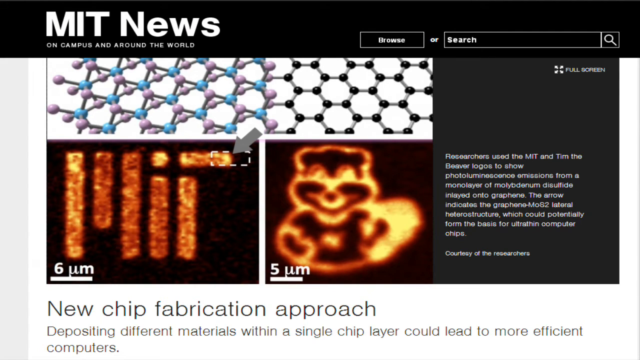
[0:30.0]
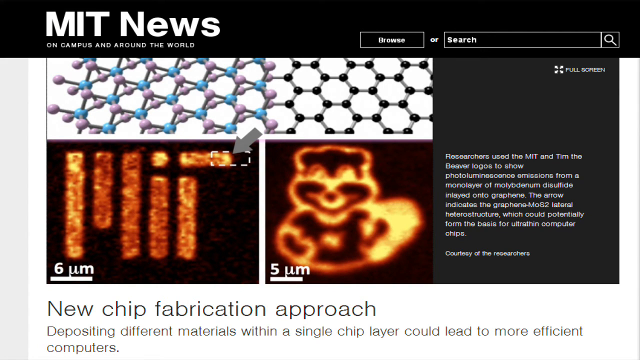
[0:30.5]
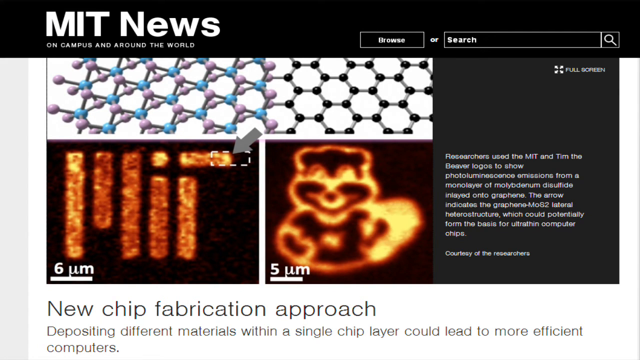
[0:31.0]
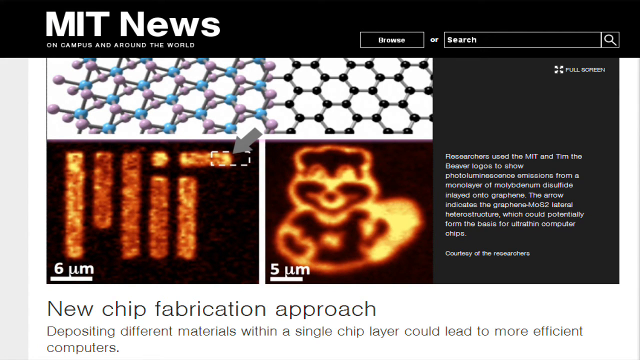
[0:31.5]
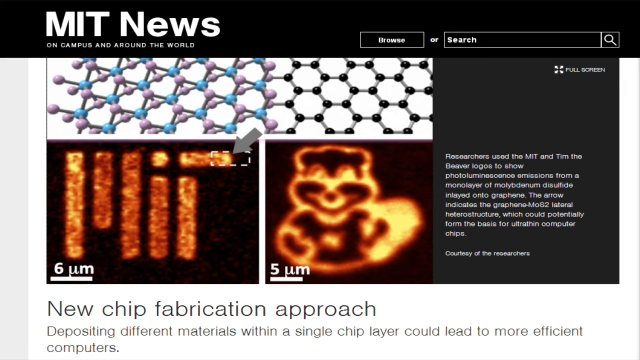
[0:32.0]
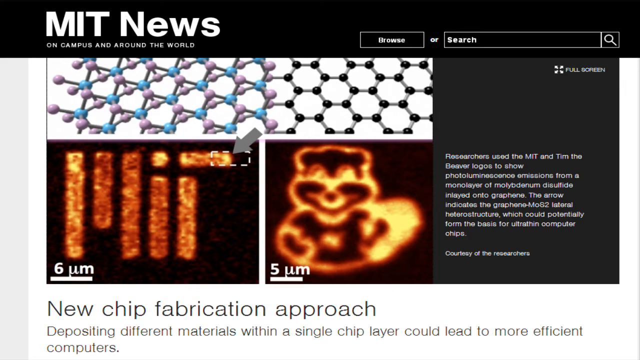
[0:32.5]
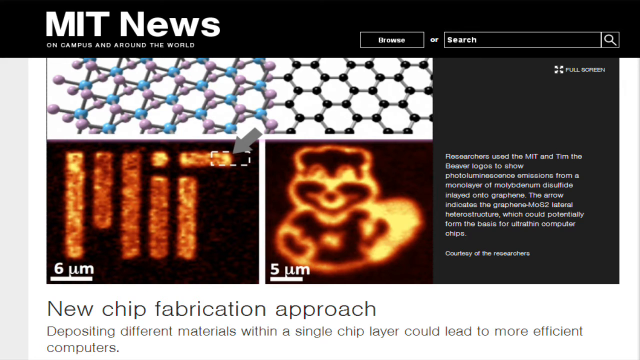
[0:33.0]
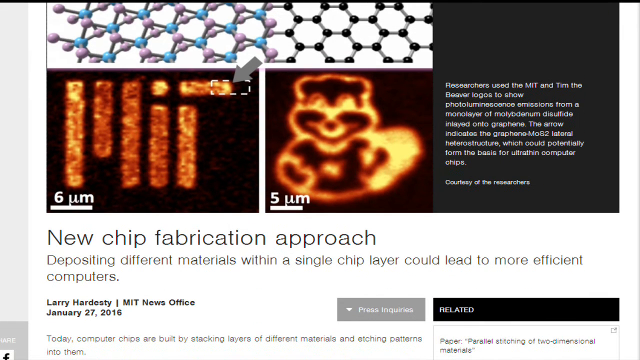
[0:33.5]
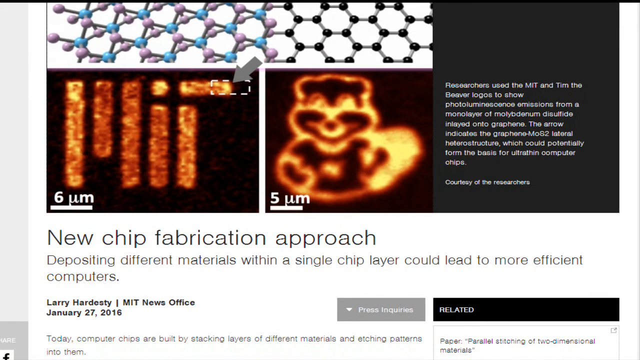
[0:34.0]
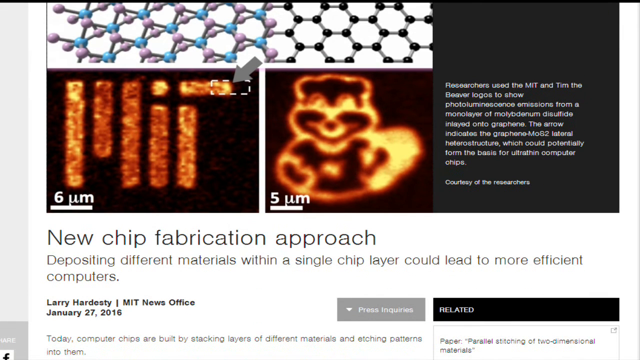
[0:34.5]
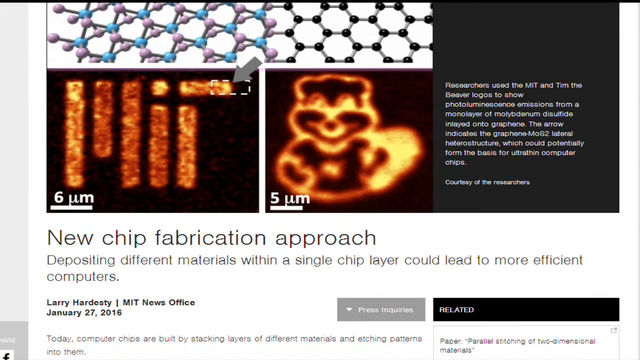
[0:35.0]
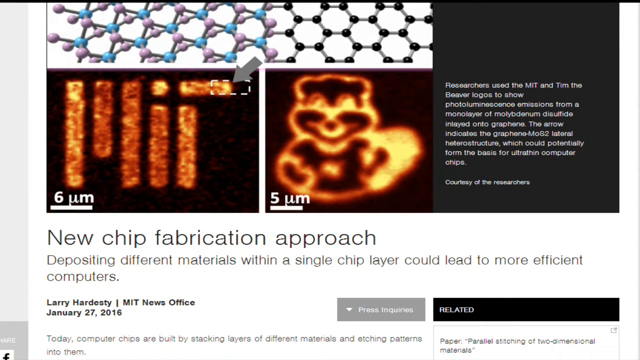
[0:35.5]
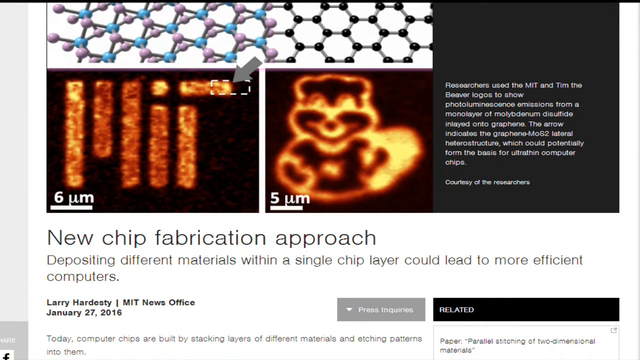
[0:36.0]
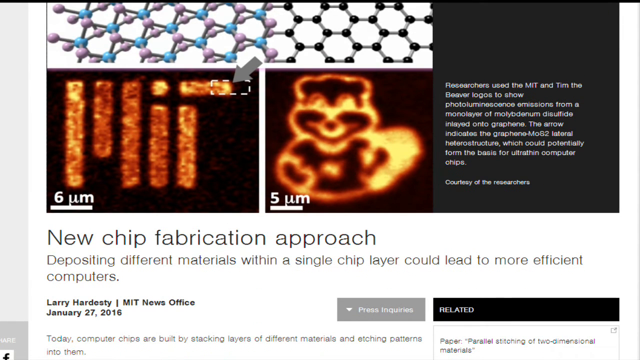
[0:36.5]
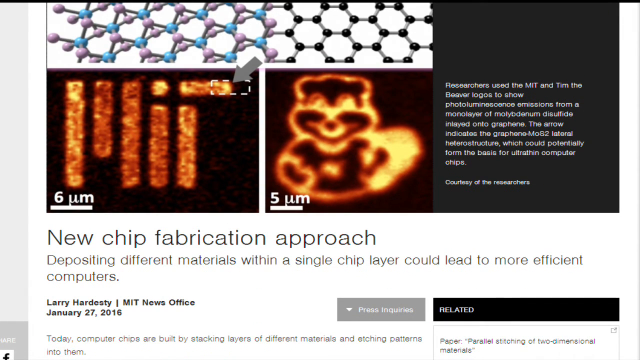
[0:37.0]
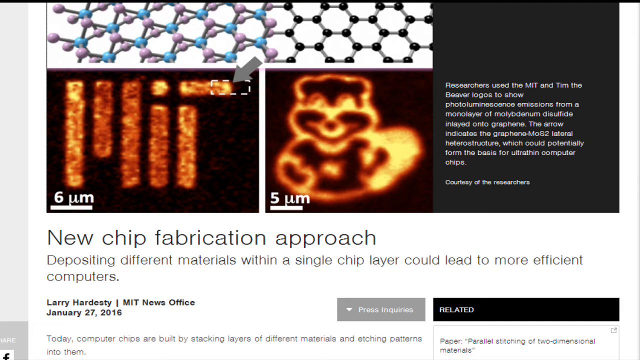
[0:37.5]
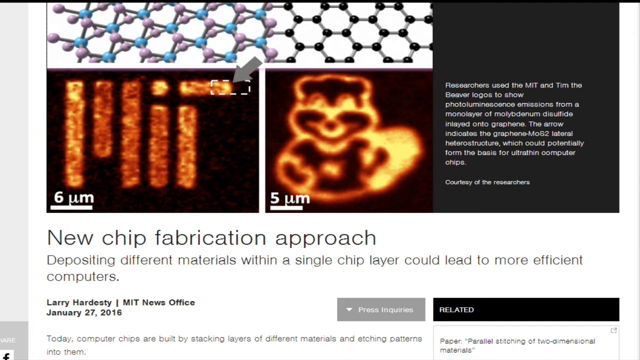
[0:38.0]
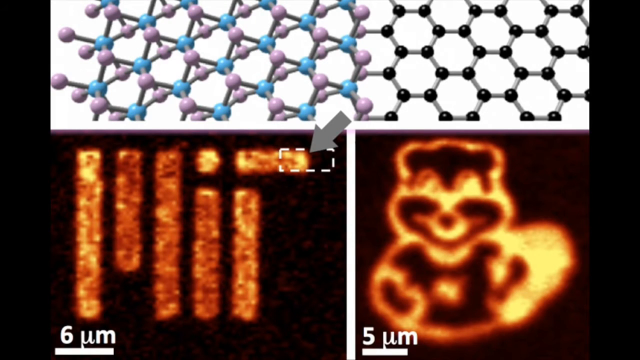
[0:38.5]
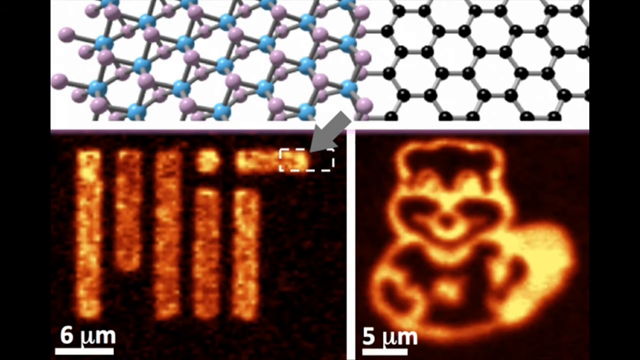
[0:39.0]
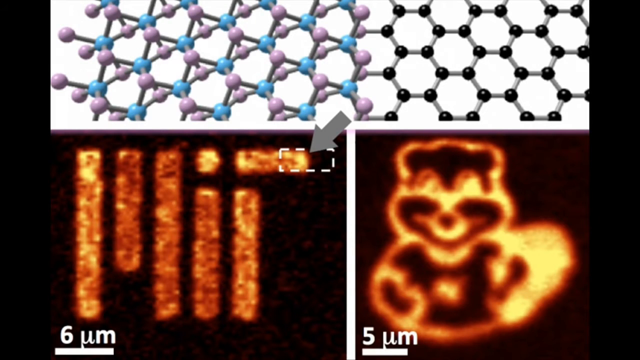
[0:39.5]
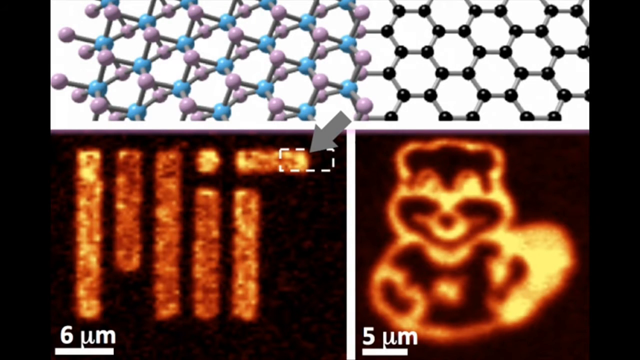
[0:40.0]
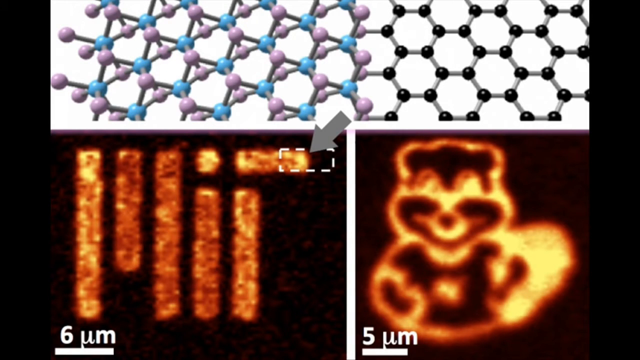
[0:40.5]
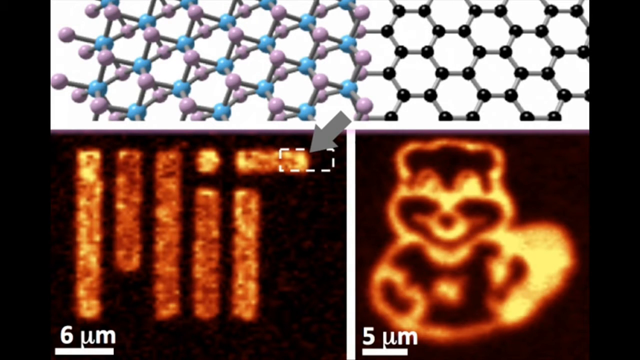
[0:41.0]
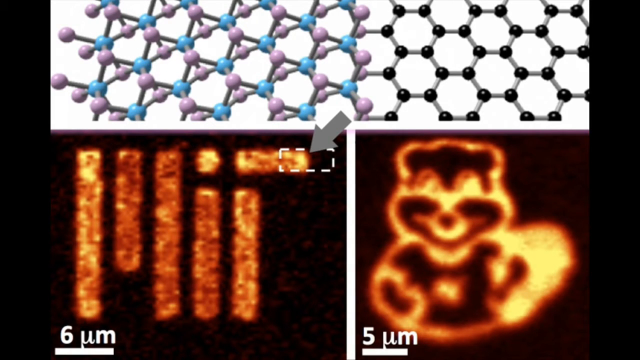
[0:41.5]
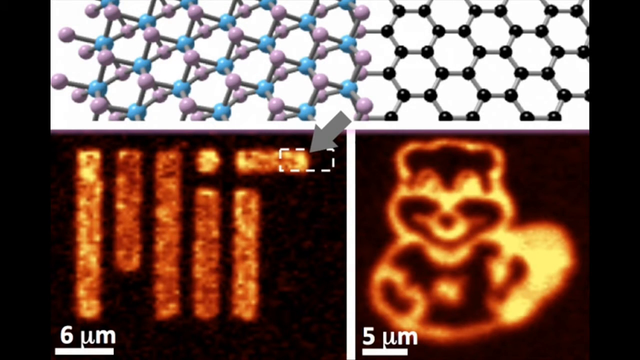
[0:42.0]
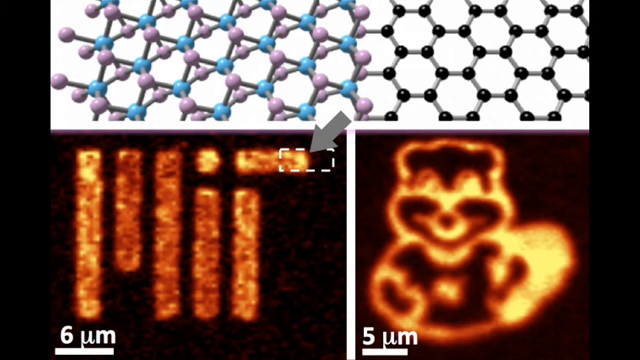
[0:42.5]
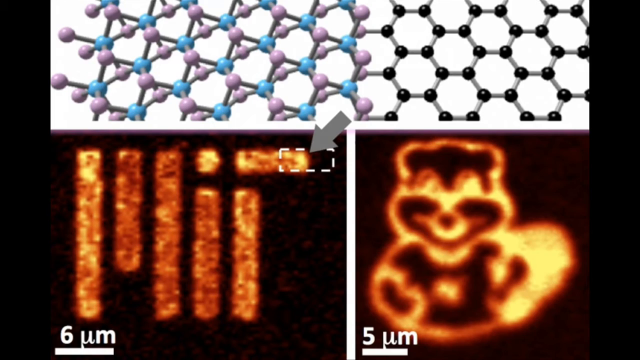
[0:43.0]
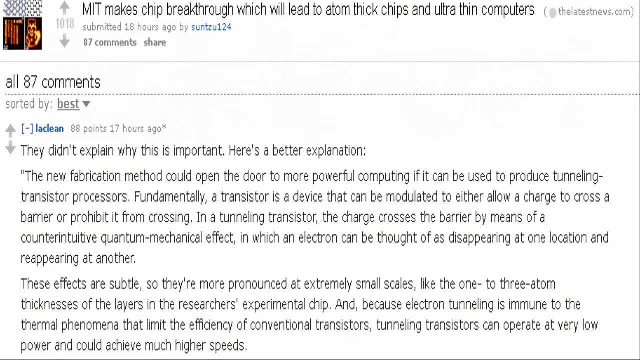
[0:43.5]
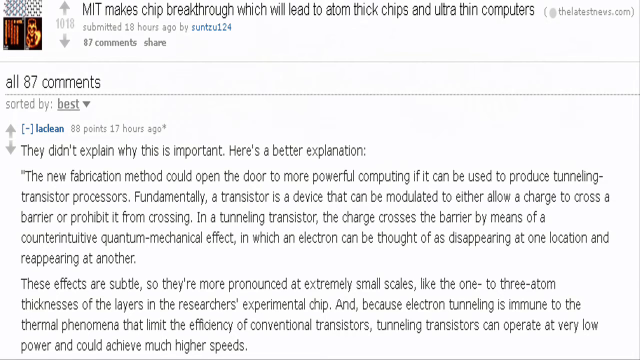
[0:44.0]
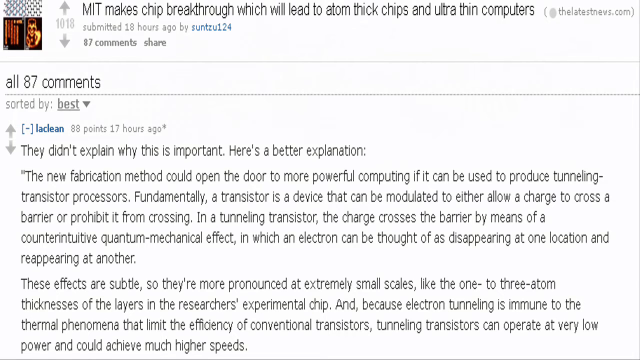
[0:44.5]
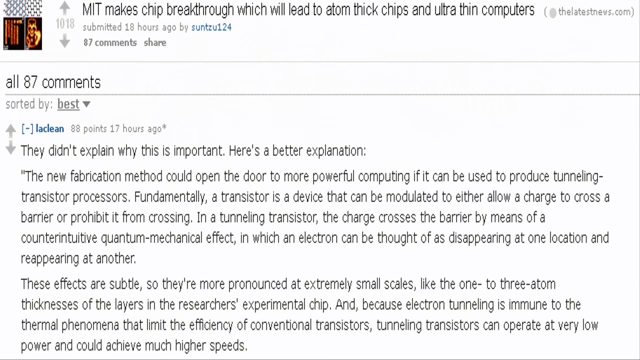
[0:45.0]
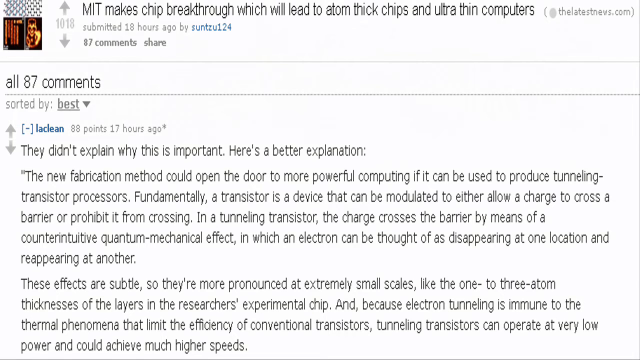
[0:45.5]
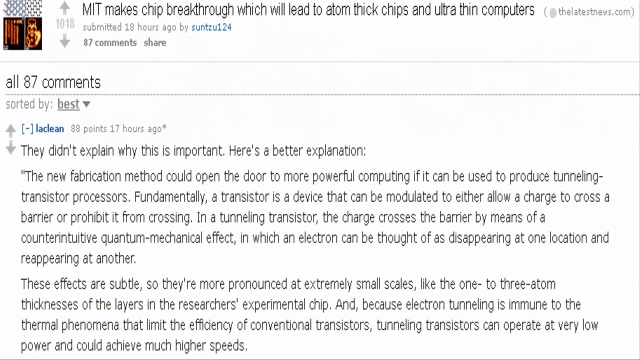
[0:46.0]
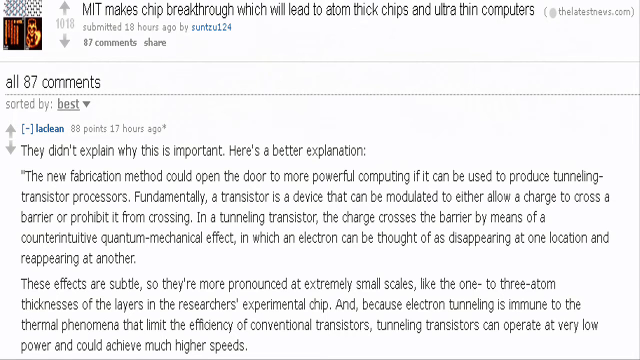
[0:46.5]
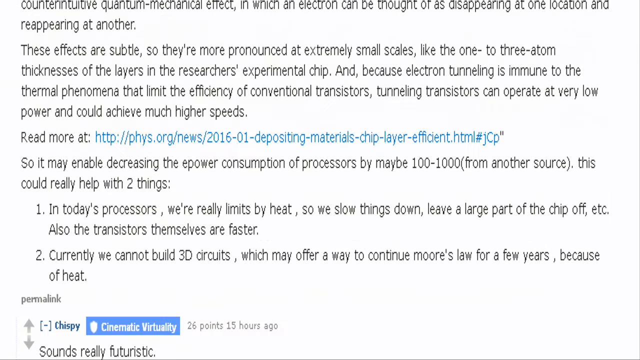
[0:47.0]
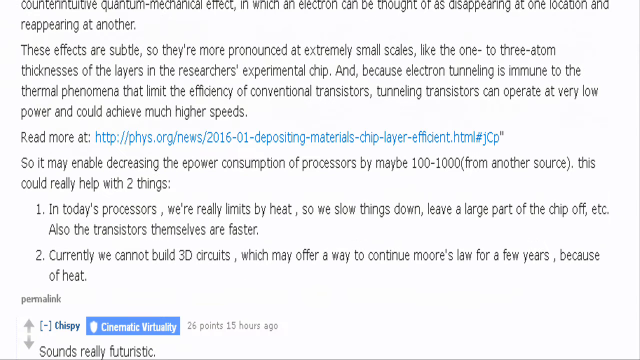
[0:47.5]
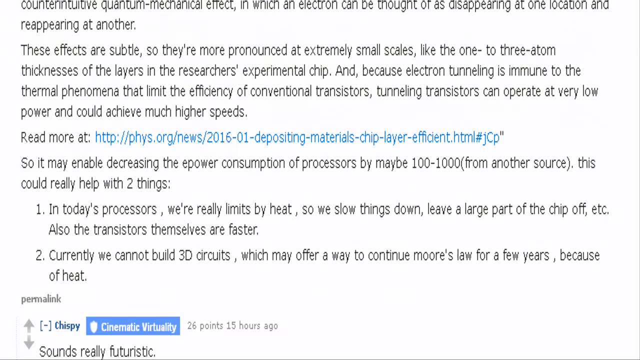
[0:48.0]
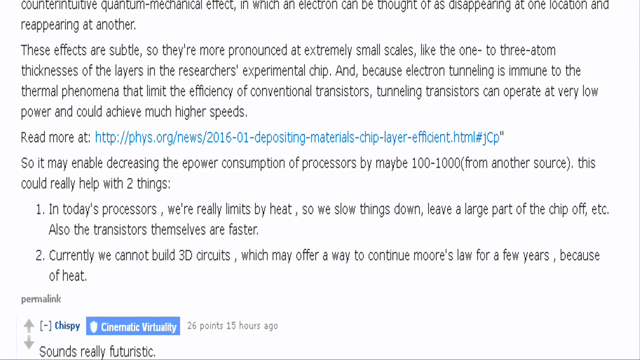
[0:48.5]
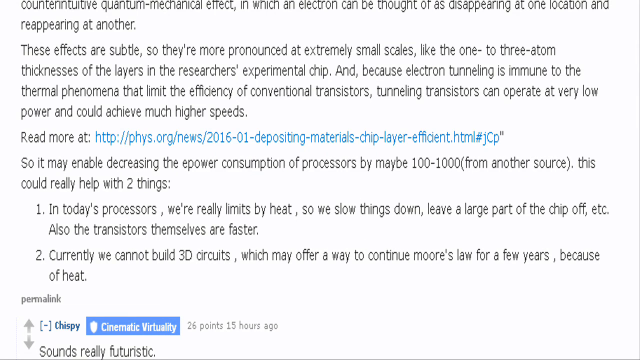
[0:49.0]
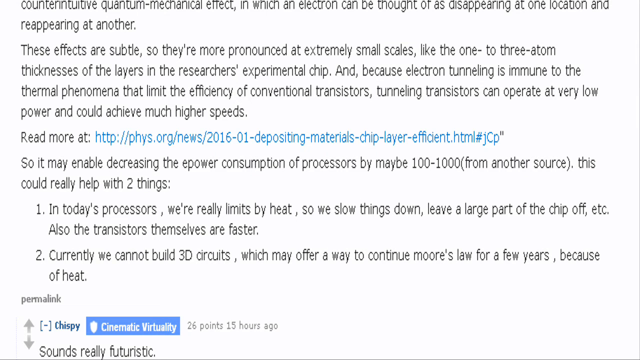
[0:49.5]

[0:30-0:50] Both of the infrared-looking images have scales, one reading six micrometers and the other five micrometers. The slide slowly pans out to a new chip fabrication approach. An arrow points to something, and then a discussion appears in a comment box. The commenters appear to be talking about the fabrication method and its ability to produce tunneling transistor processors. It is a big question-and-answer thread on the topic, almost like Reddit, though what exactly the site is is not shown.